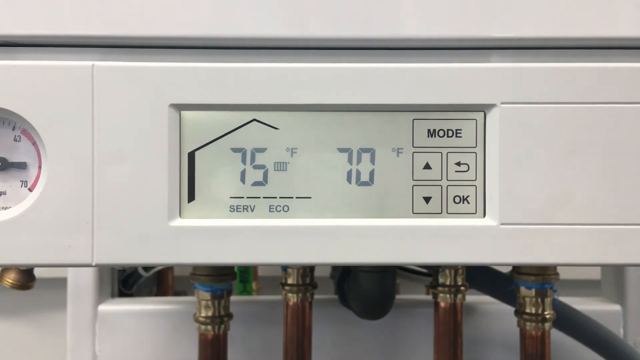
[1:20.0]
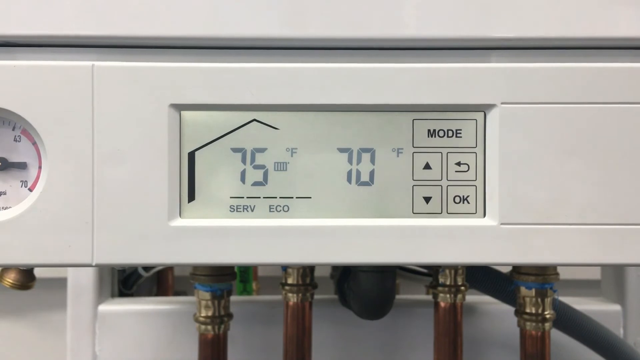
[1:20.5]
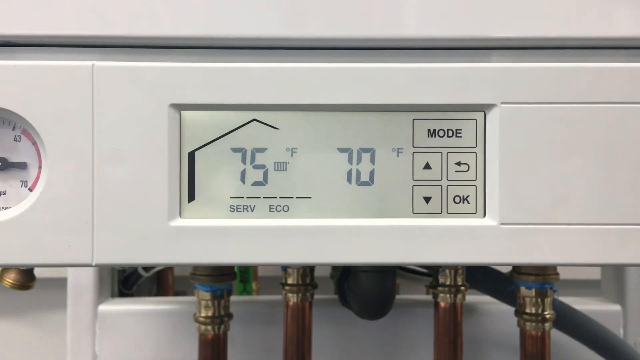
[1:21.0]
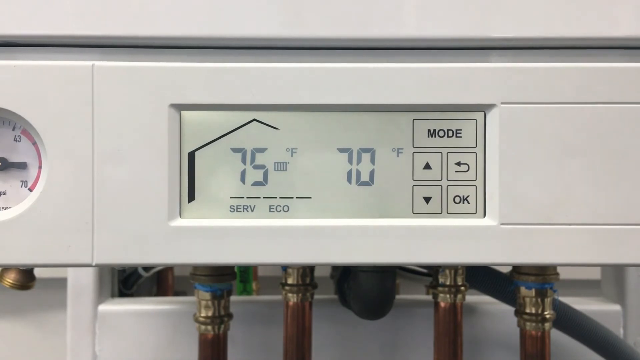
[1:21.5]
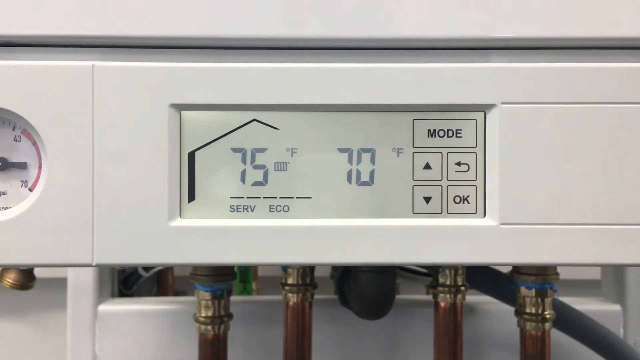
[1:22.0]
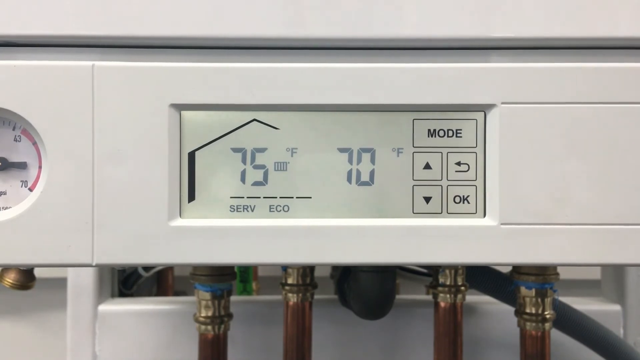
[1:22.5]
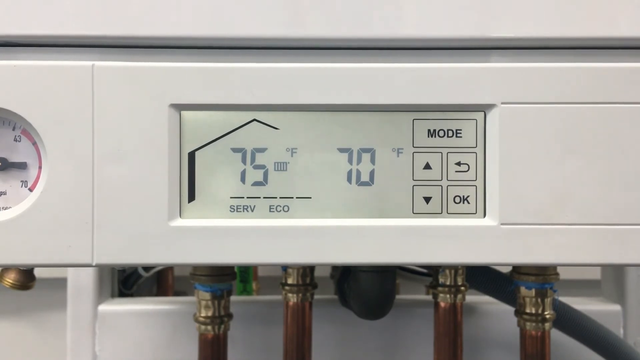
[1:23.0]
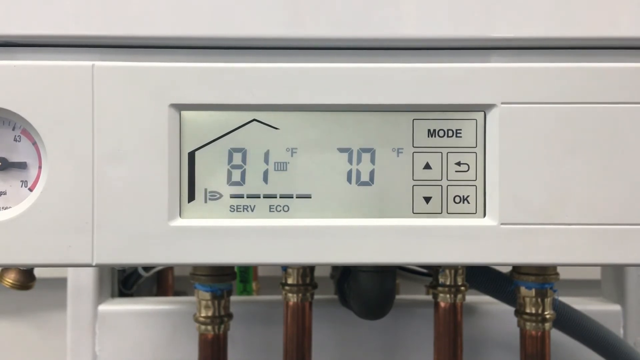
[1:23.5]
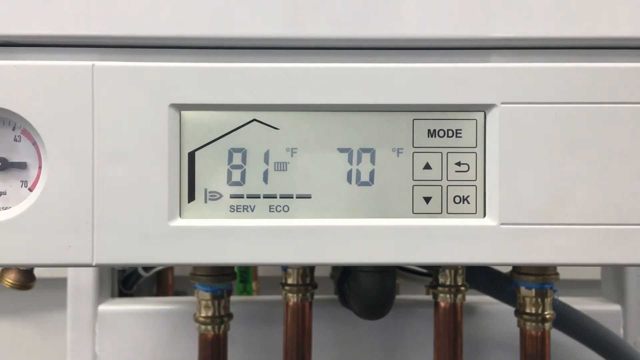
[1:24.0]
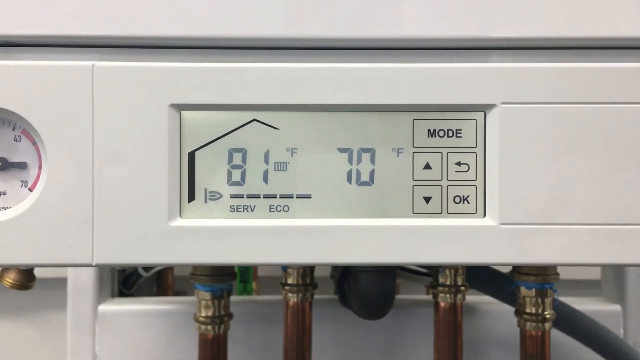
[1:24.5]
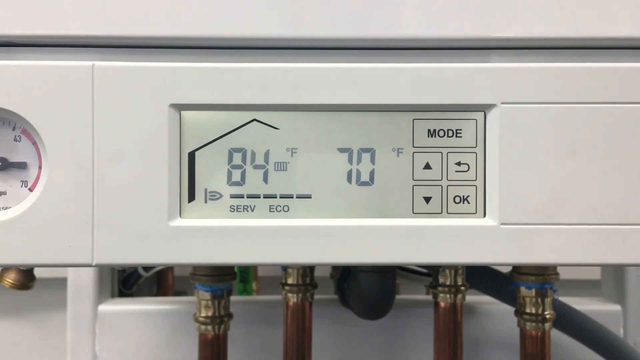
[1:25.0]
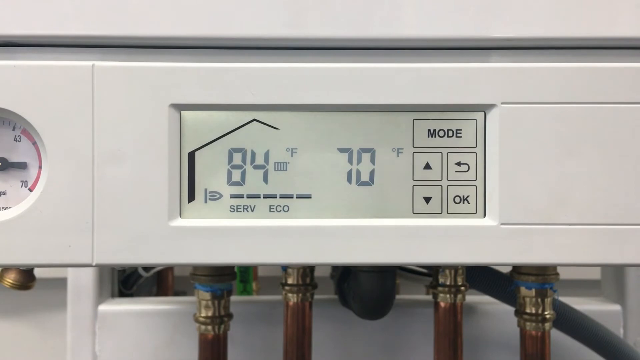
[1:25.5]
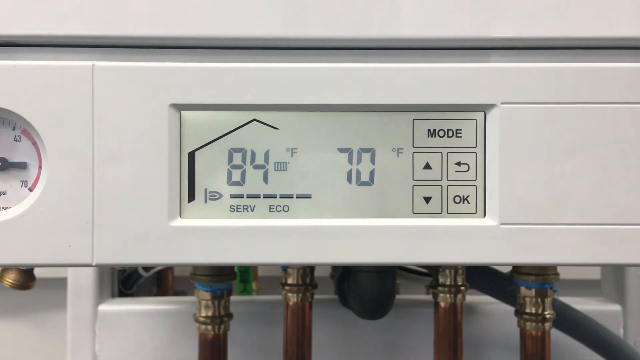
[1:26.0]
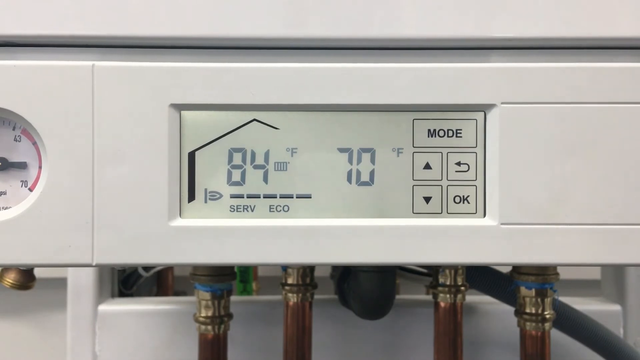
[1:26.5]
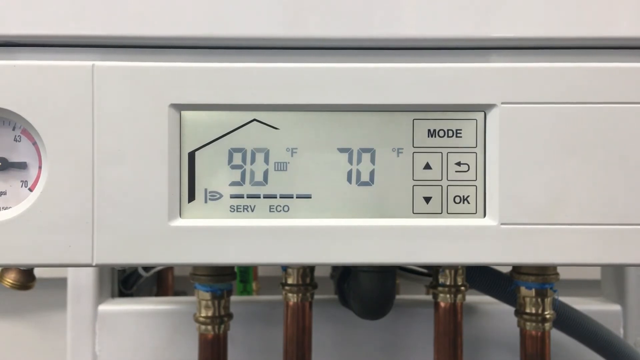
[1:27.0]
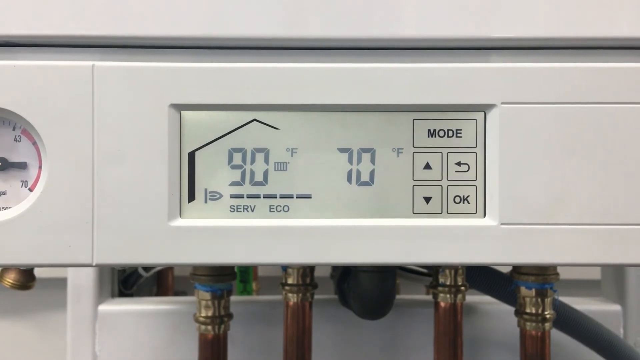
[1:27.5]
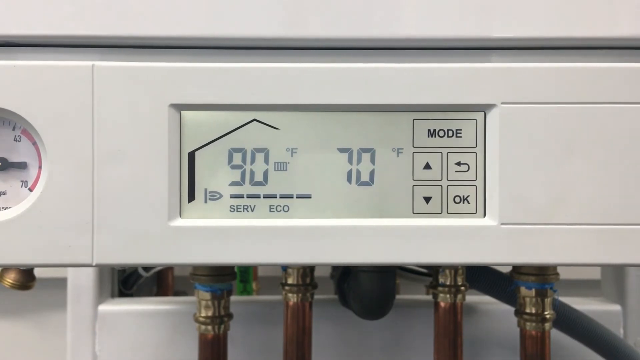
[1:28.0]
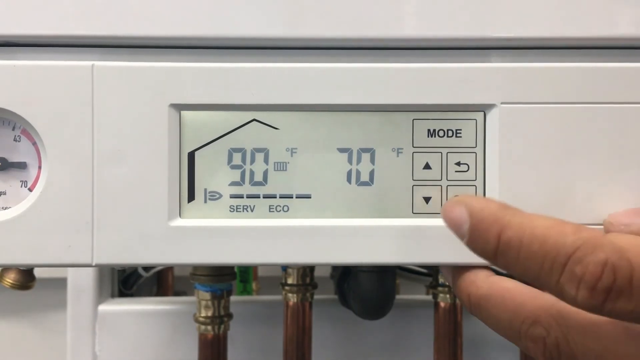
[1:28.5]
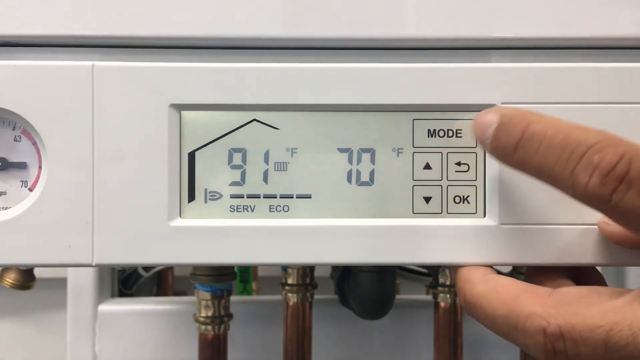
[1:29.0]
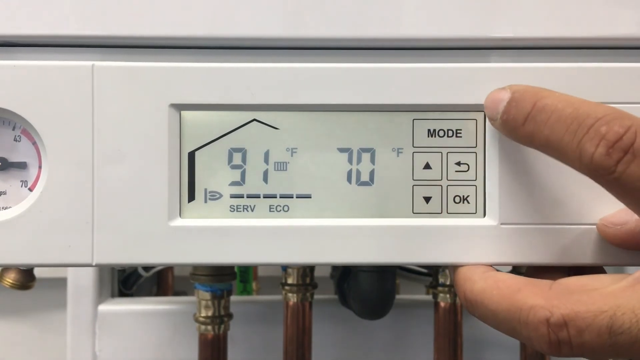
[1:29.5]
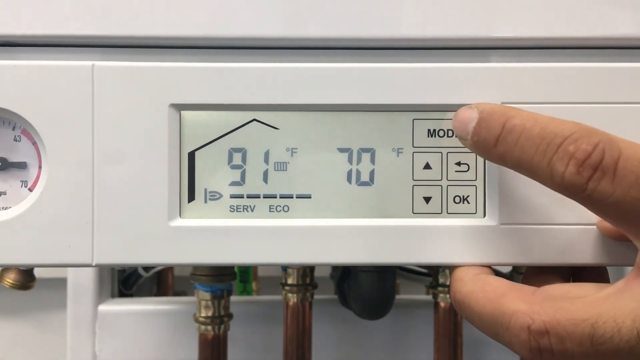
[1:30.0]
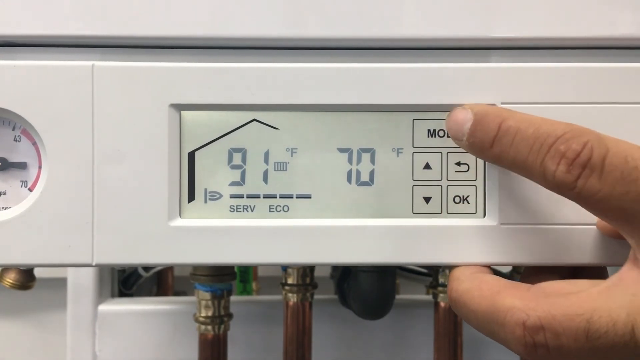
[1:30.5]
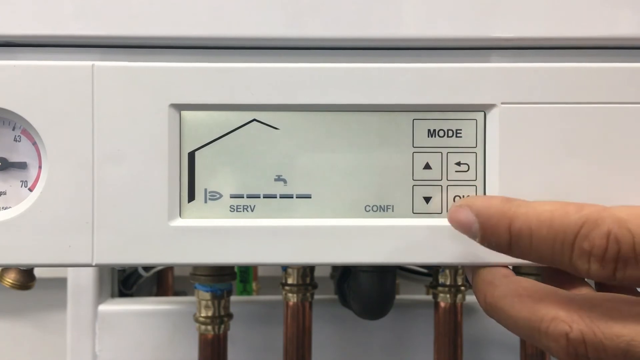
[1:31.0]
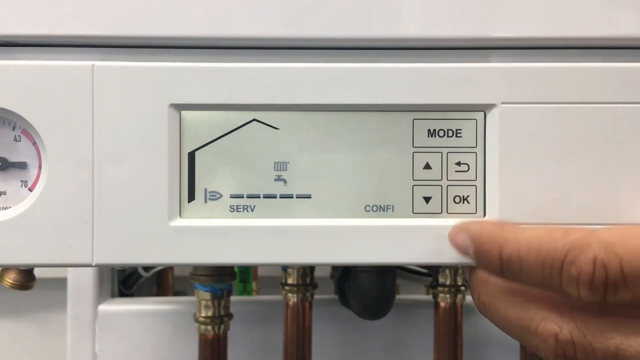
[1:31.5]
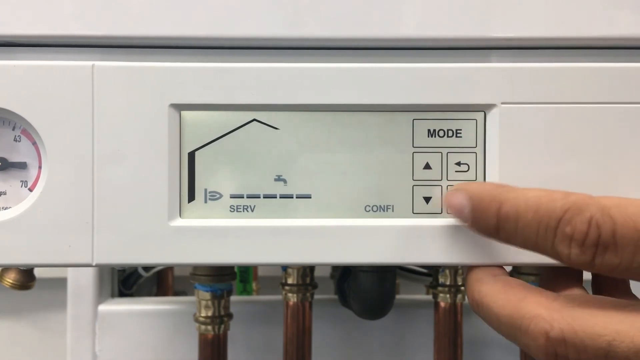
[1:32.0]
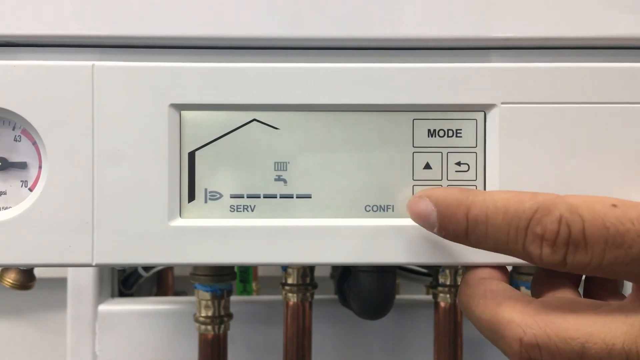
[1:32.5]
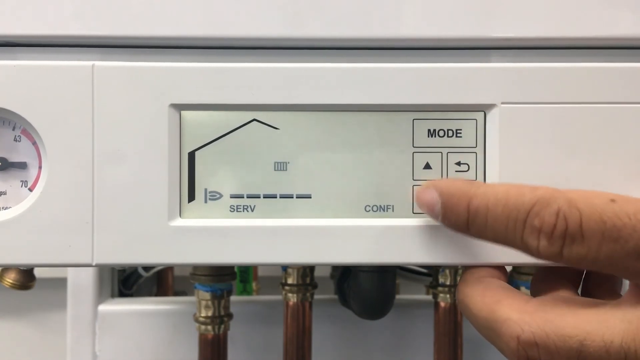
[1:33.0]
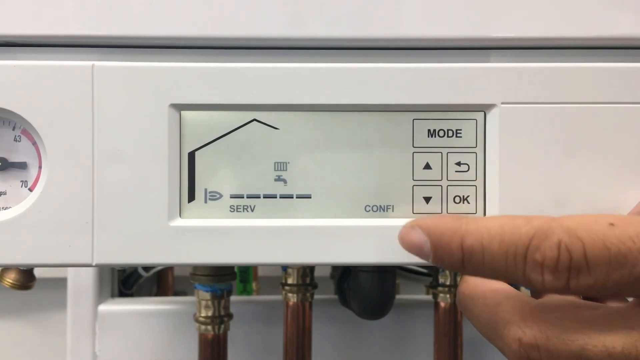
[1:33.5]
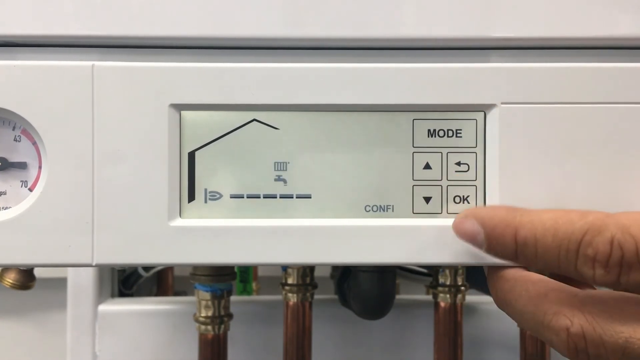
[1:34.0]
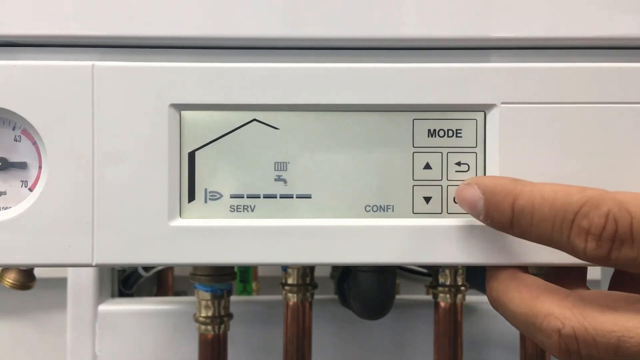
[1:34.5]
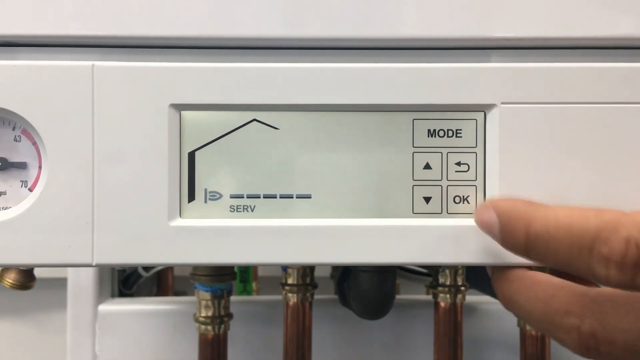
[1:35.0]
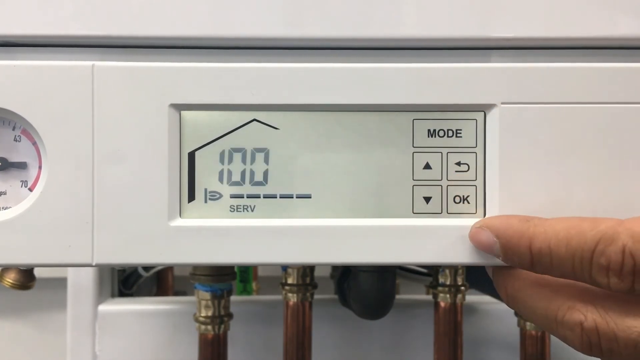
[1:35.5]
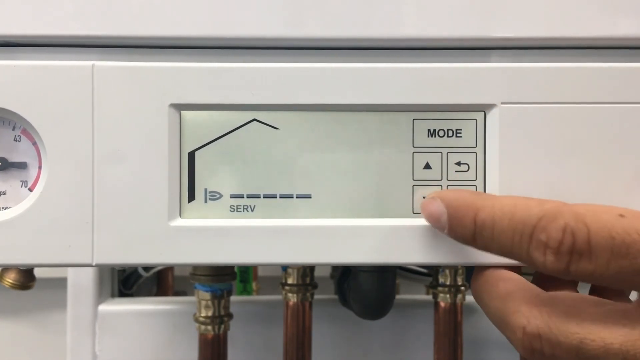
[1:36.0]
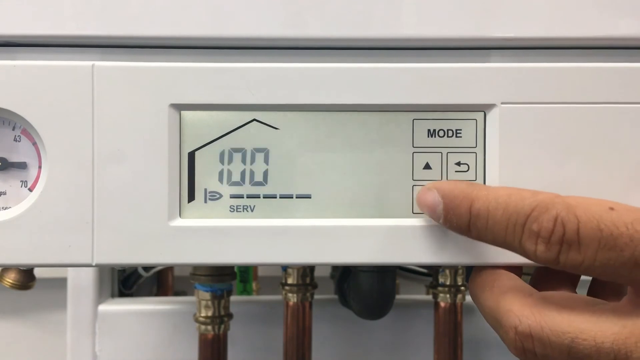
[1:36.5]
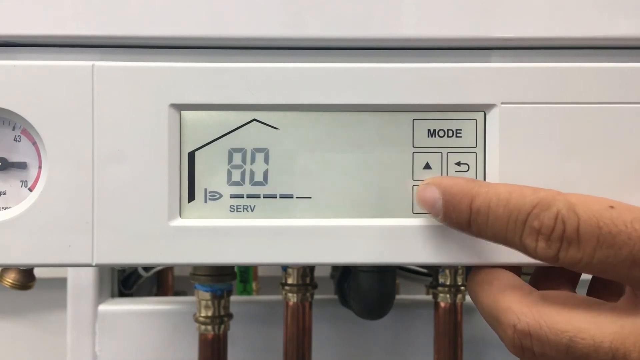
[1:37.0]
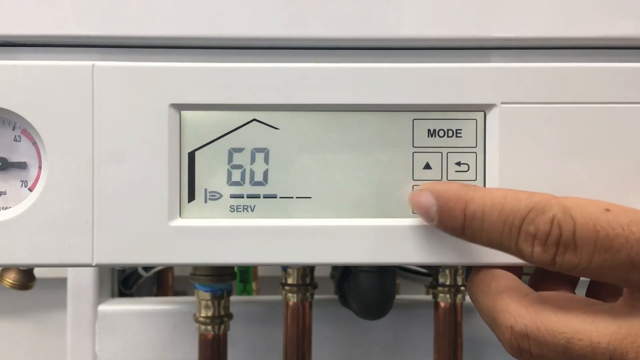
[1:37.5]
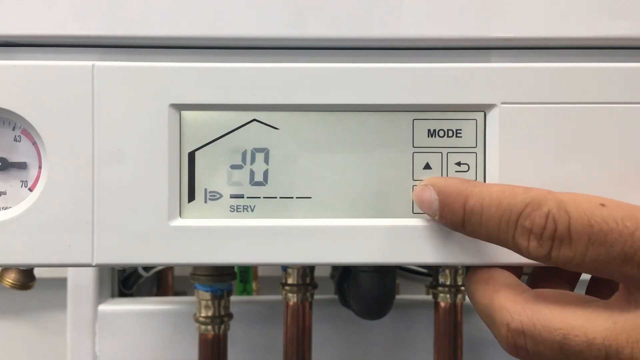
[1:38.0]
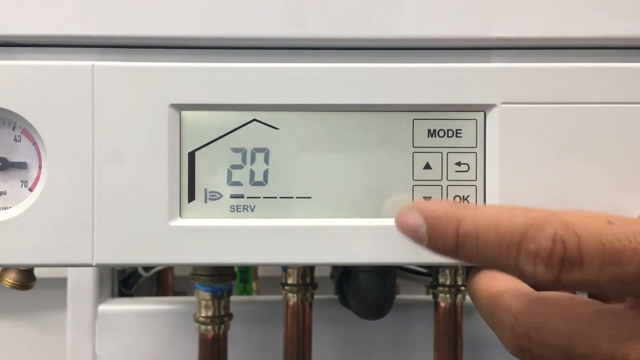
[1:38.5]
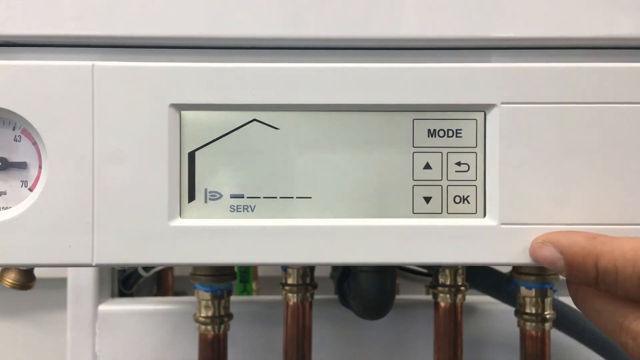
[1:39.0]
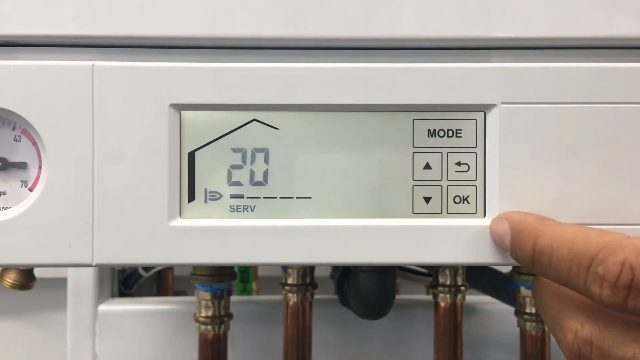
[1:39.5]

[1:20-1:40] The display stays on 75 degrees Fahrenheit, with "self" and "Eco" inside the house and 70 degrees Fahrenheit outside, unchanged for a while. The temperature then rises to 81 and 84 degrees, and some kind of flame appears without anything being pressed. It reaches 90, then 91 degrees Fahrenheit. The man's hand appears and presses the mode button, and all the temperatures disappear; the faucet, "self," a pump and the flame are shown. The display goes back to "self" and the number is lowered to 20, after which he presses OK.